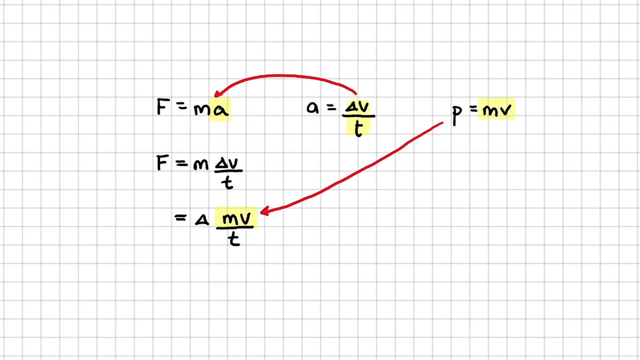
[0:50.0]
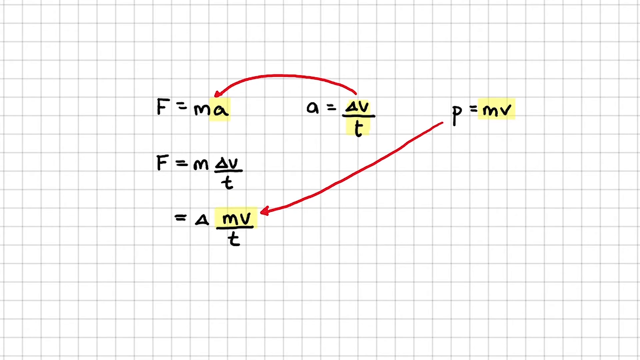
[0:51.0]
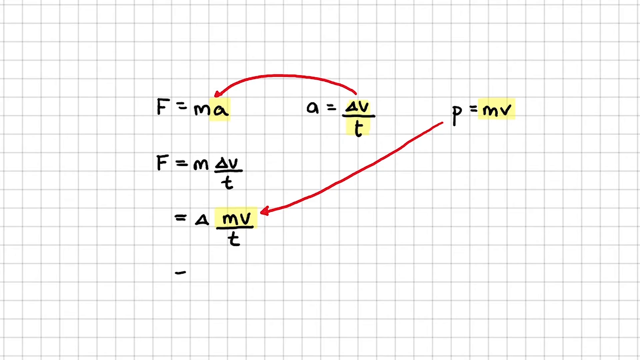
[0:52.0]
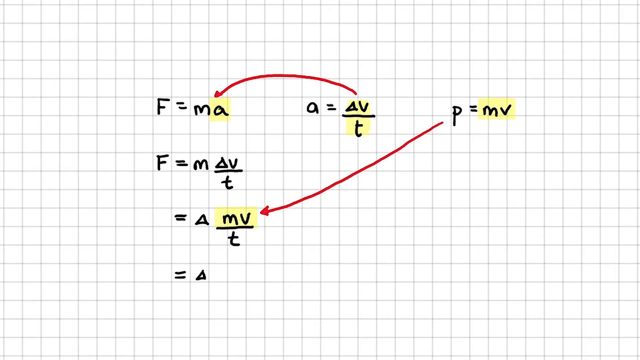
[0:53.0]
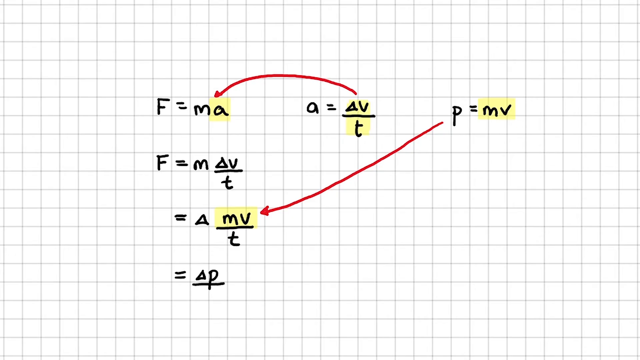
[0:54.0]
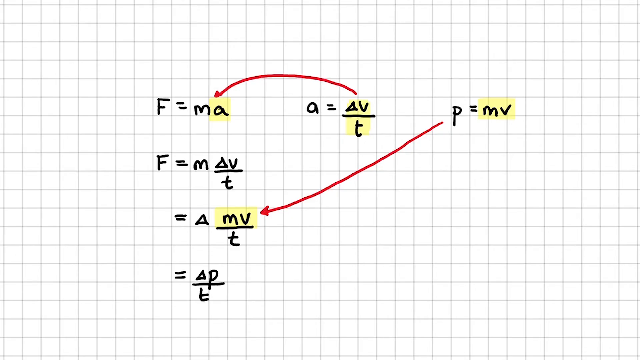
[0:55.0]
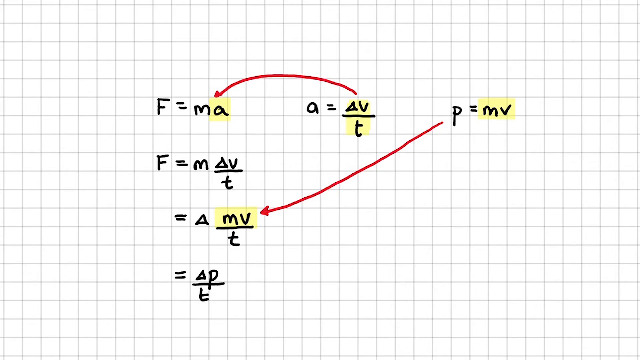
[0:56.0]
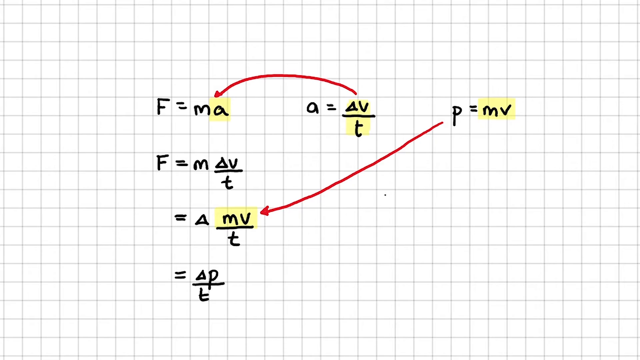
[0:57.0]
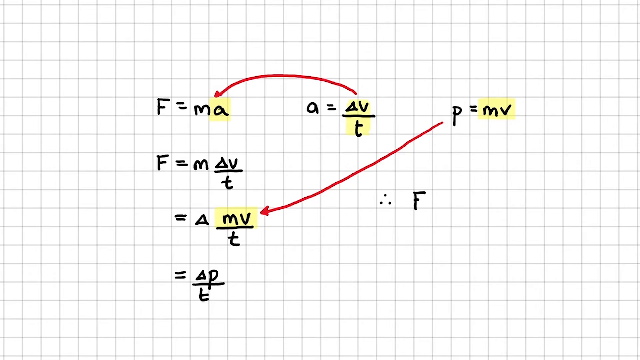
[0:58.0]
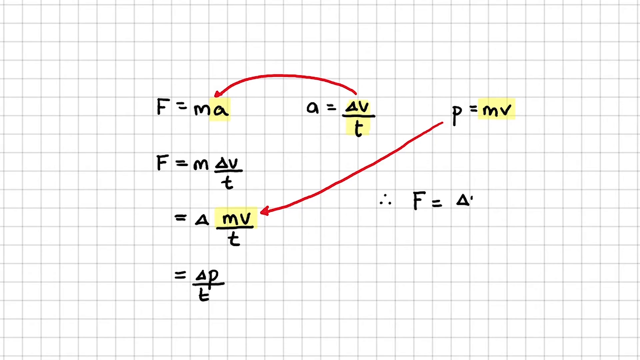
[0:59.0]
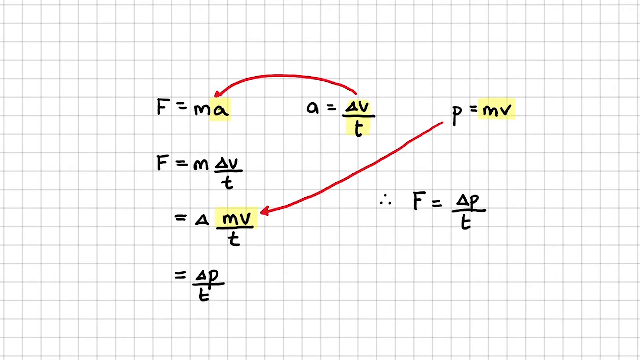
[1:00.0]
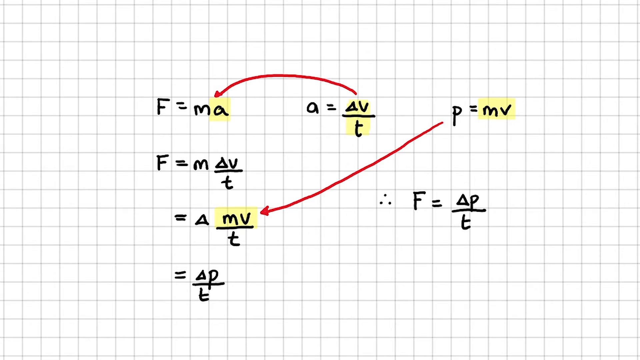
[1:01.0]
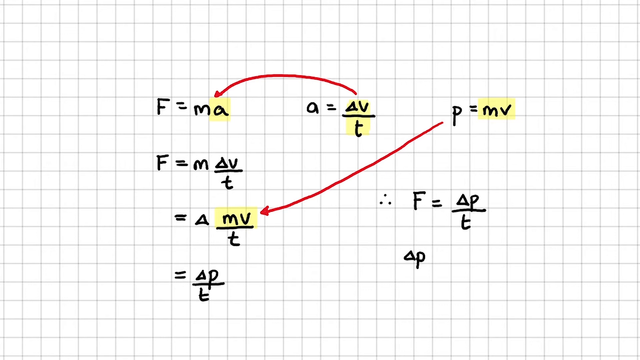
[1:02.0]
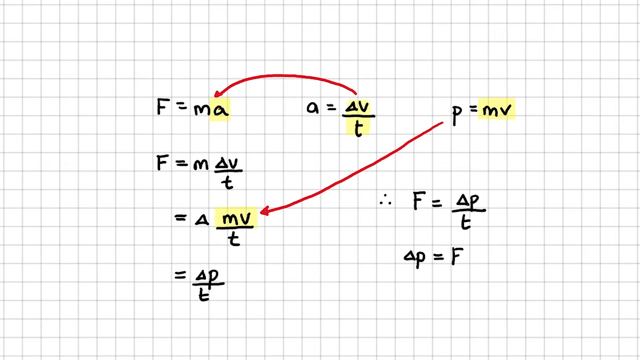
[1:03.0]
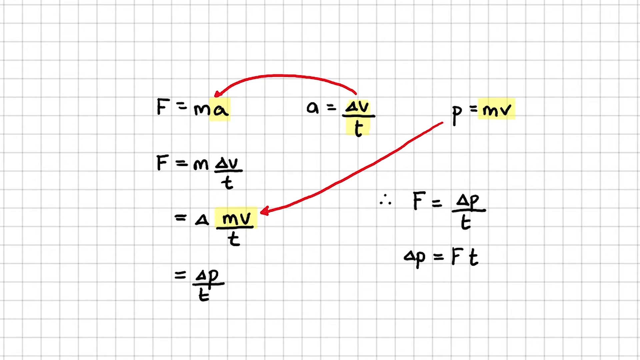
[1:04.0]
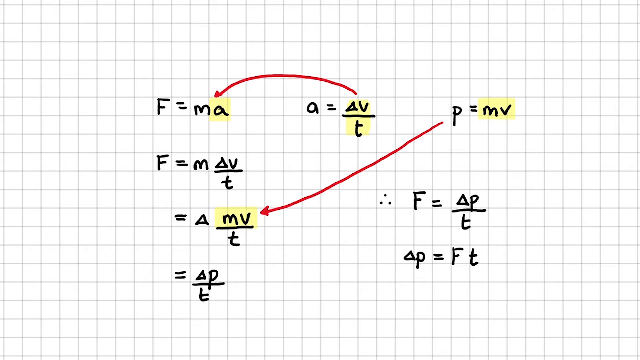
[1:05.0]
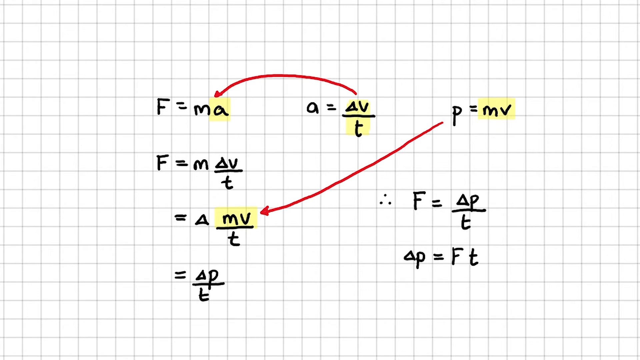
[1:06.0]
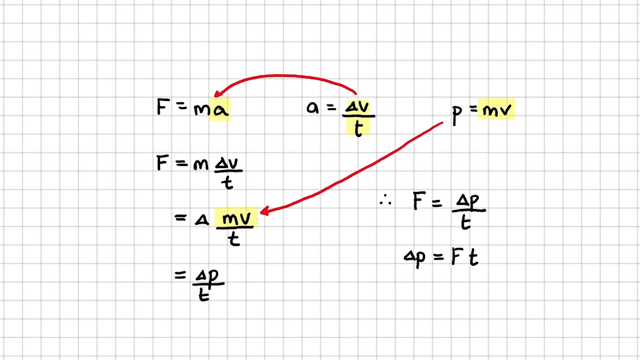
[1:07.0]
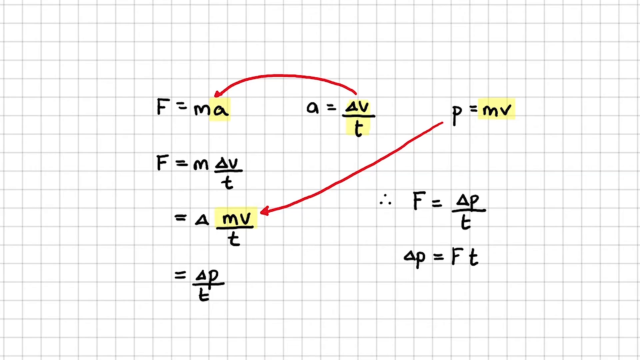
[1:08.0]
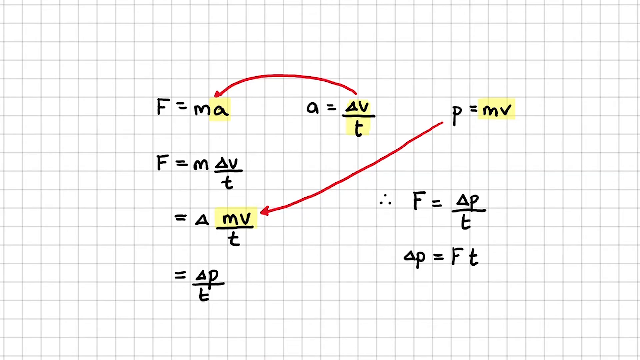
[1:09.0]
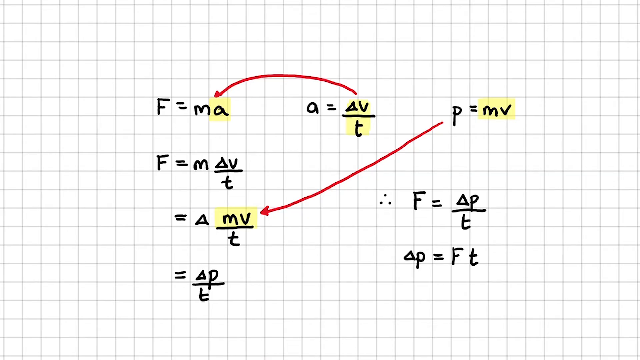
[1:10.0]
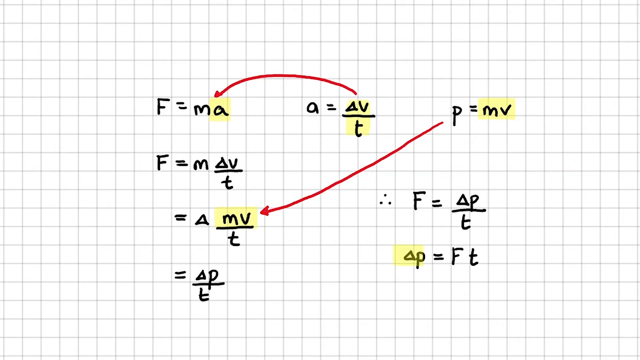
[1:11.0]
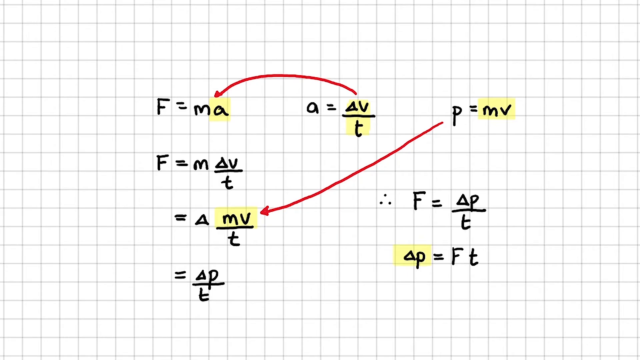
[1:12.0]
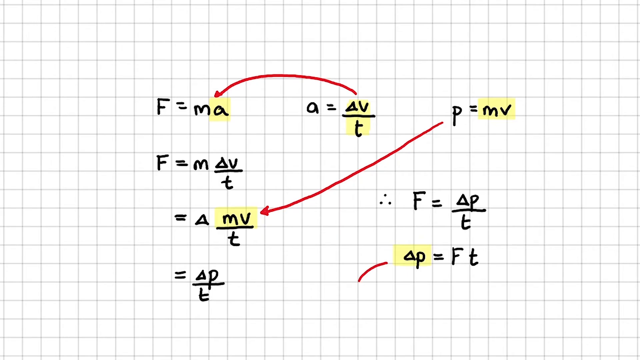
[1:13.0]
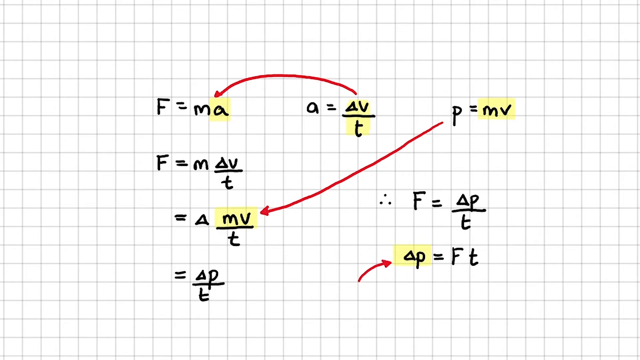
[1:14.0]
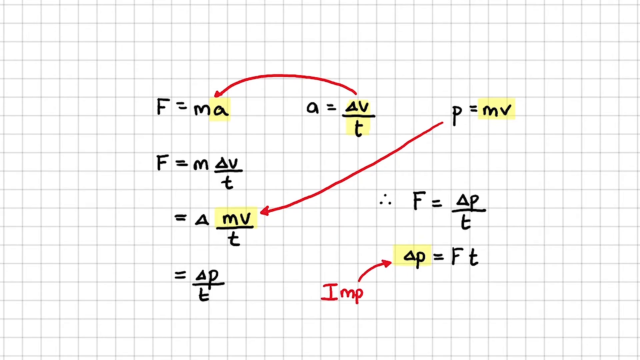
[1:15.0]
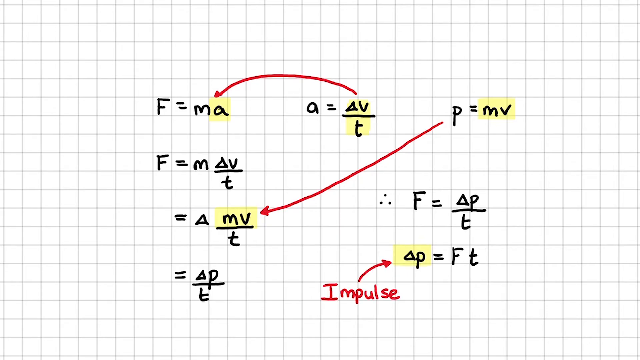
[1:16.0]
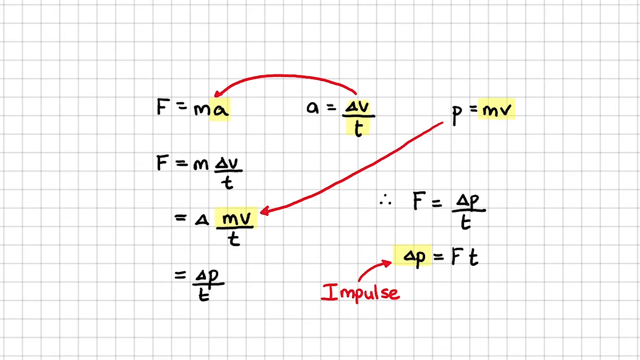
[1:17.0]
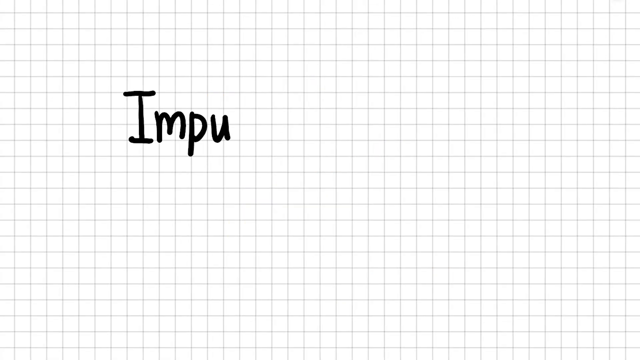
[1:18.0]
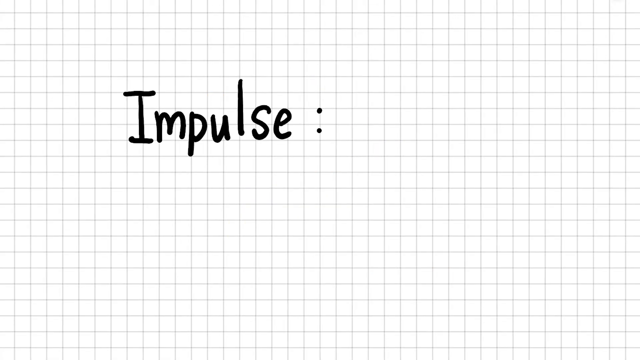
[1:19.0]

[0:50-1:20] A presentation screen with a grid-like background shows physics formulas in black. The first line reads "F=ma", with a highlighted in yellow, followed by "a=delta v/t" and "p=mv", with mv highlighted in yellow, all separated by equal tab spaces; a red arrow runs from the second formula to the first. Below the first formula are "F=m delta v/t" and below that "=mv/t", with MV highlighted in yellow. A straight arrow runs from the third formula on the first line to the latest formula. The equals signs are aligned in the first column for all three rows. In a fourth row, "=delta p/t" is written. Below the red arrow, "therefore F=delta p/t" is written, with "therefore" drawn as three dots, and below that "delta p=Ft". A red arrow is drawn from the bottom pointing at the latest delta p, "impulse" is written in red, and this delta p is highlighted in yellow. The next screen, with the same grid background, shows "Impulse:" in black text and "delta p=Ft" in red on the same line.